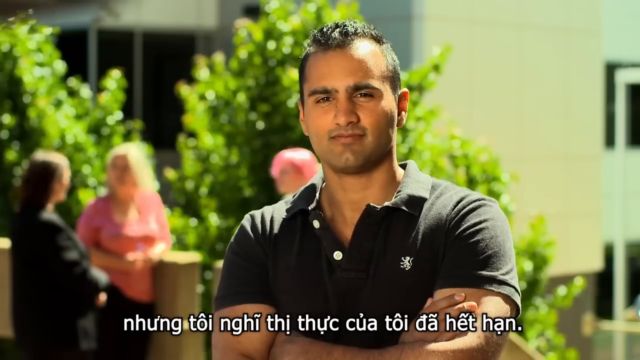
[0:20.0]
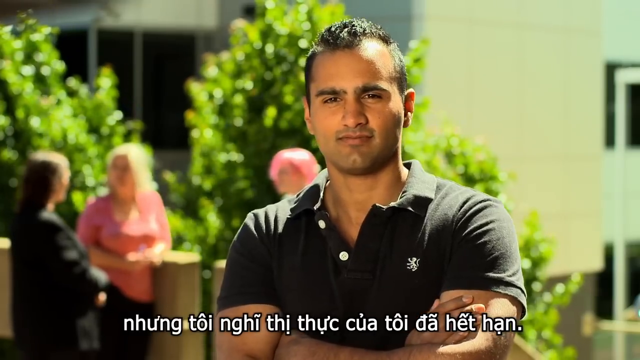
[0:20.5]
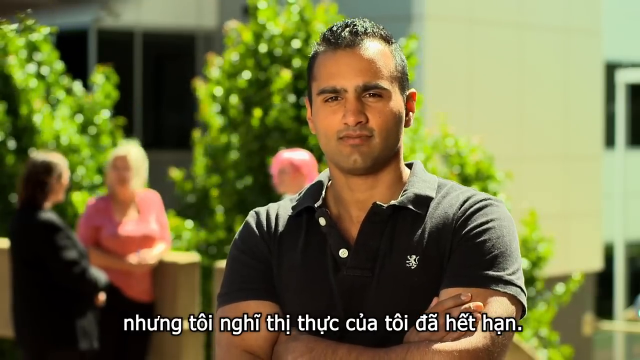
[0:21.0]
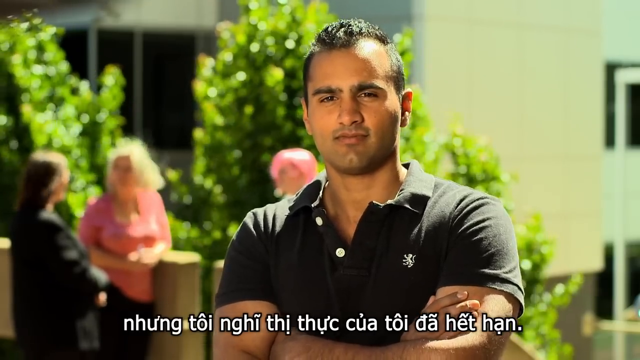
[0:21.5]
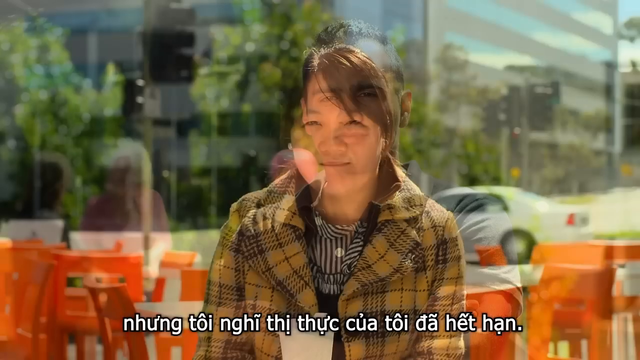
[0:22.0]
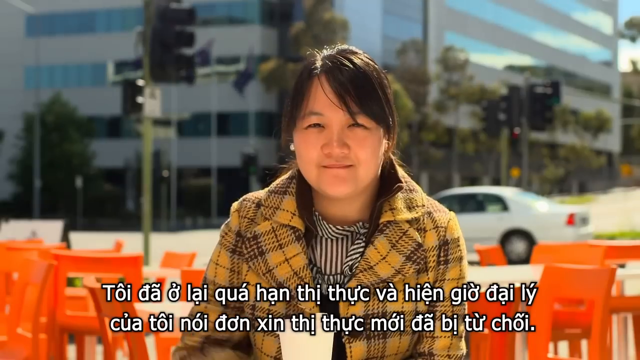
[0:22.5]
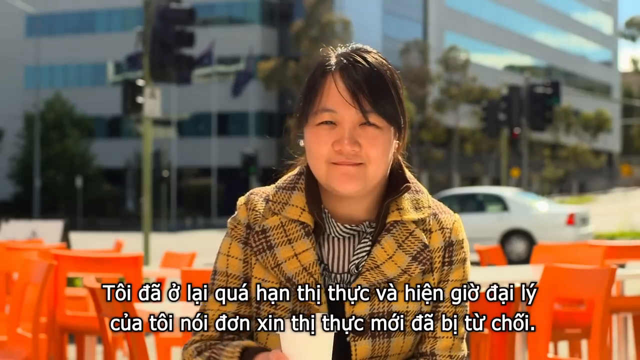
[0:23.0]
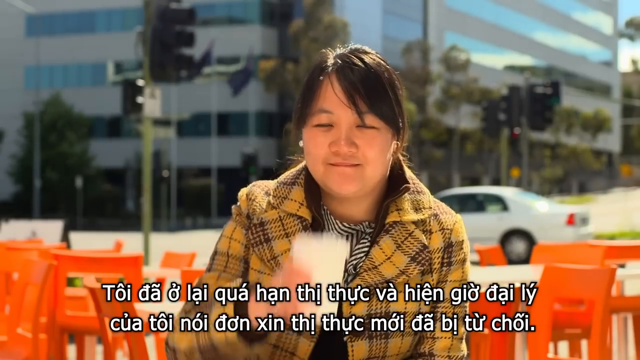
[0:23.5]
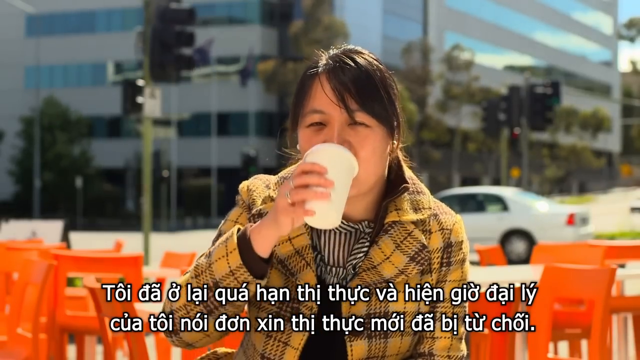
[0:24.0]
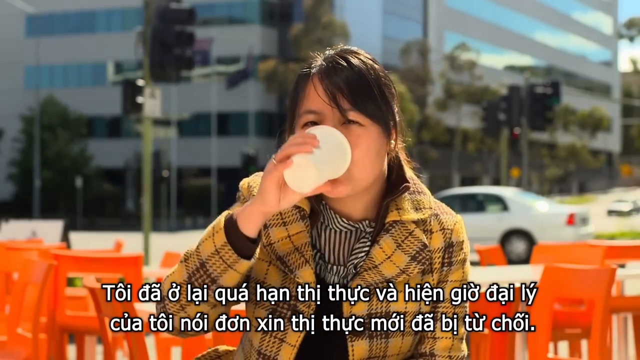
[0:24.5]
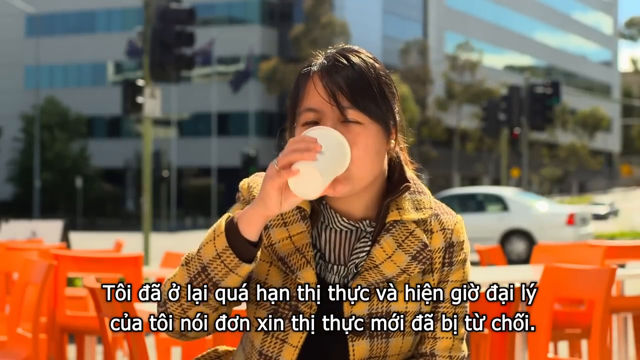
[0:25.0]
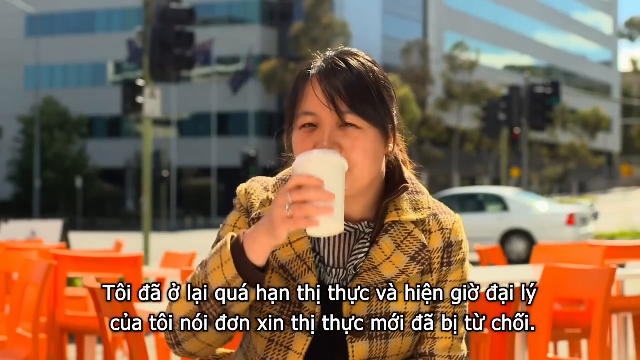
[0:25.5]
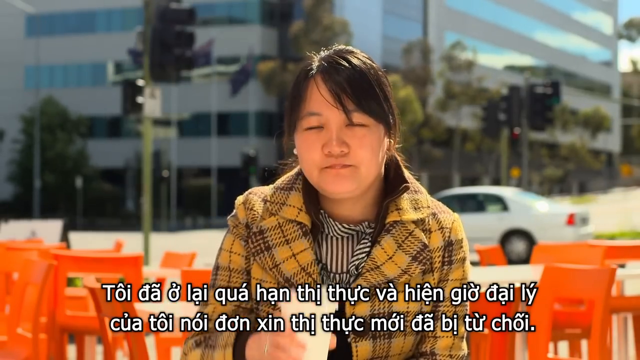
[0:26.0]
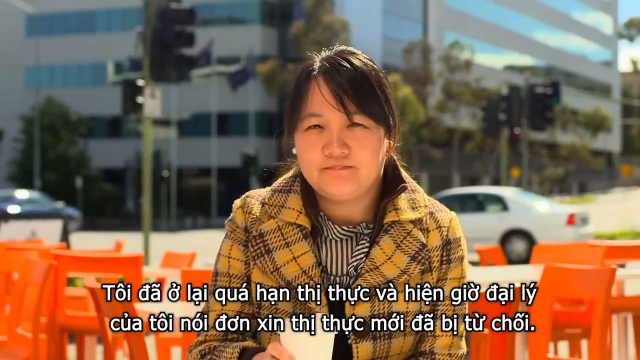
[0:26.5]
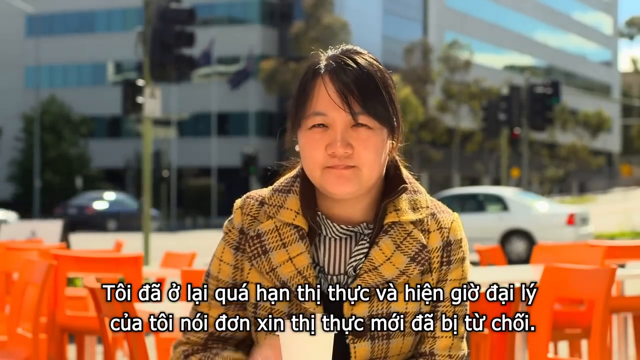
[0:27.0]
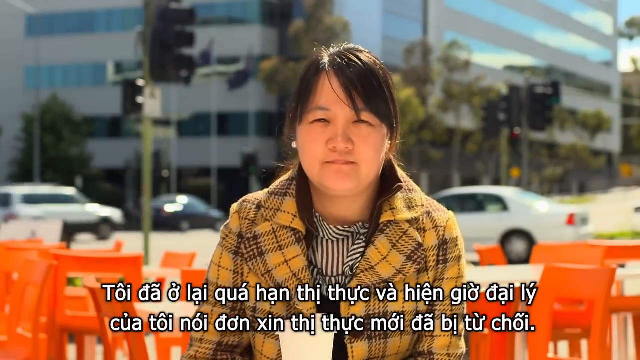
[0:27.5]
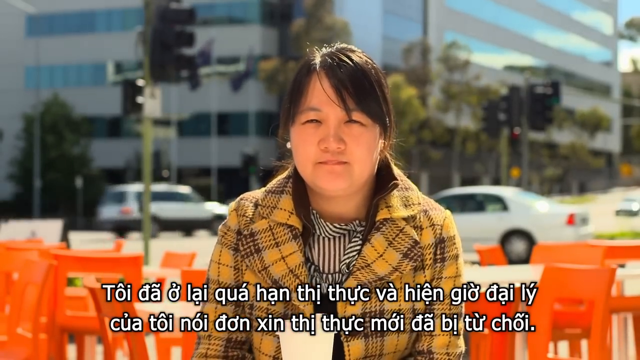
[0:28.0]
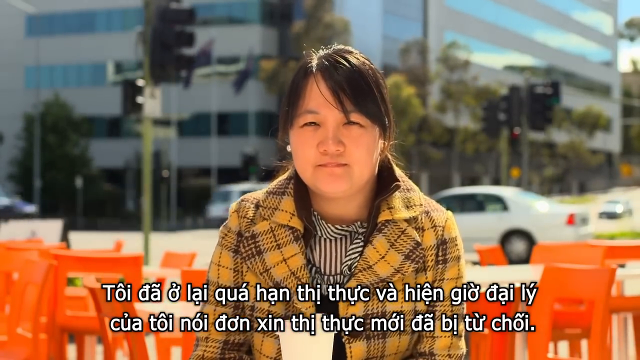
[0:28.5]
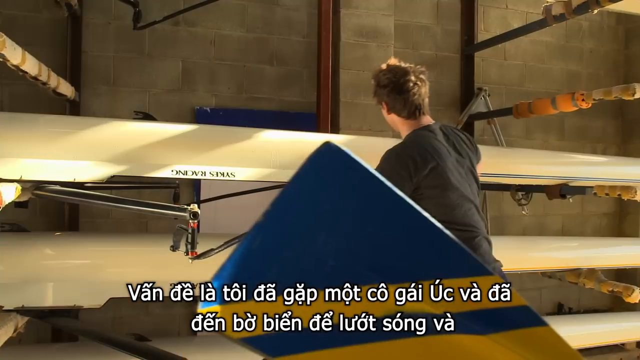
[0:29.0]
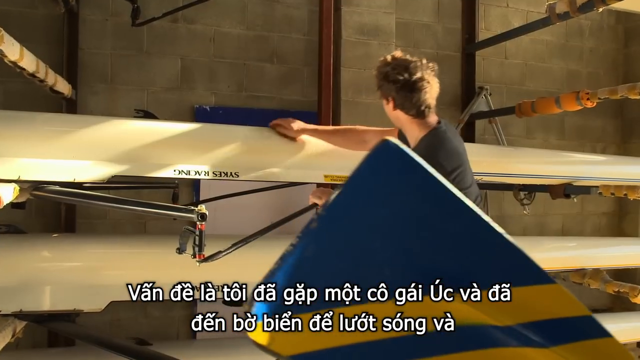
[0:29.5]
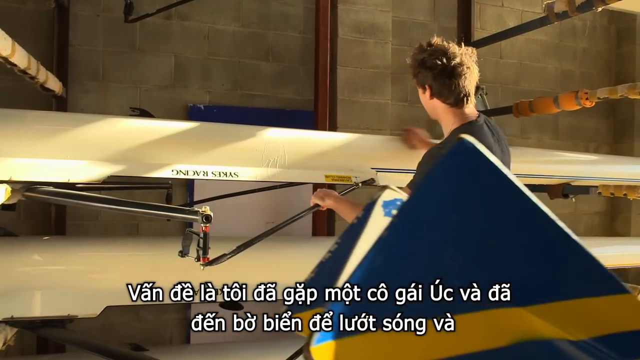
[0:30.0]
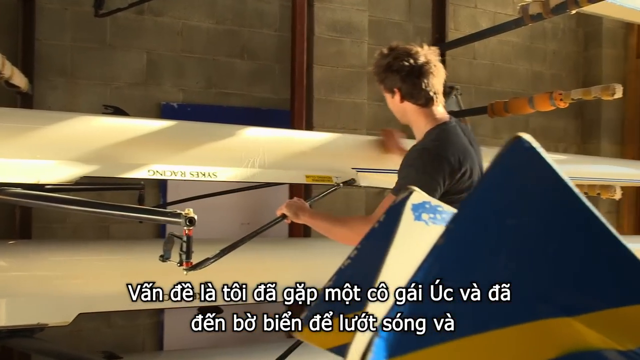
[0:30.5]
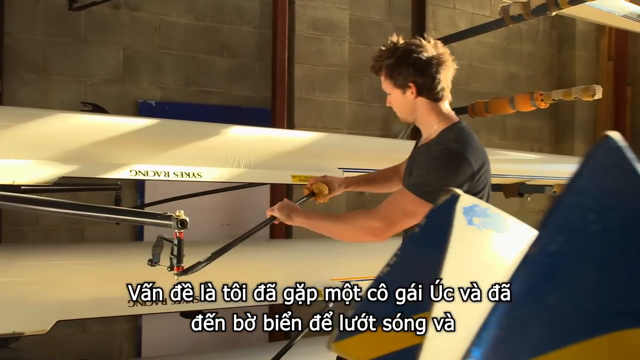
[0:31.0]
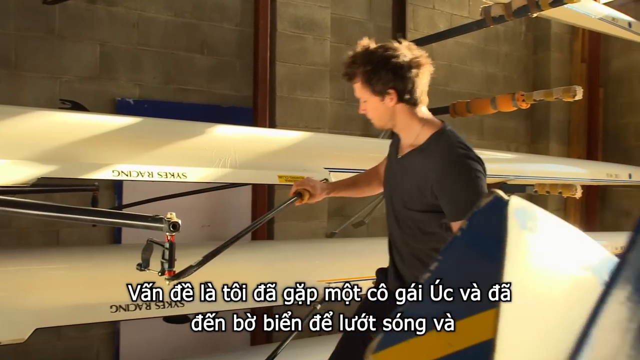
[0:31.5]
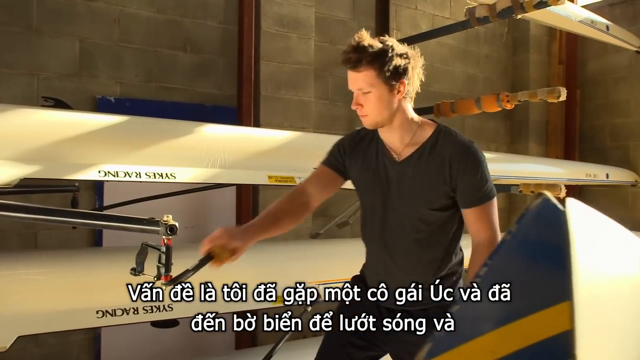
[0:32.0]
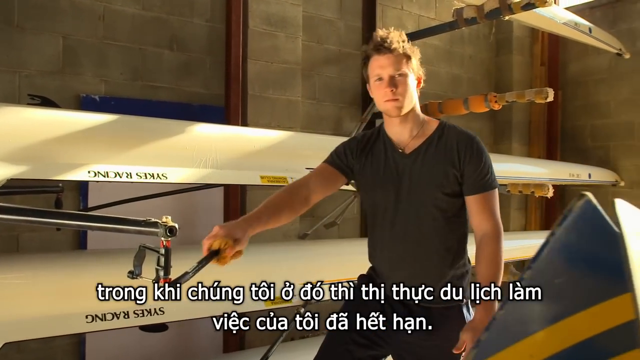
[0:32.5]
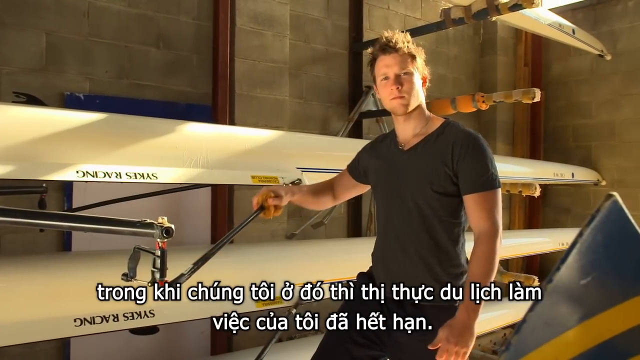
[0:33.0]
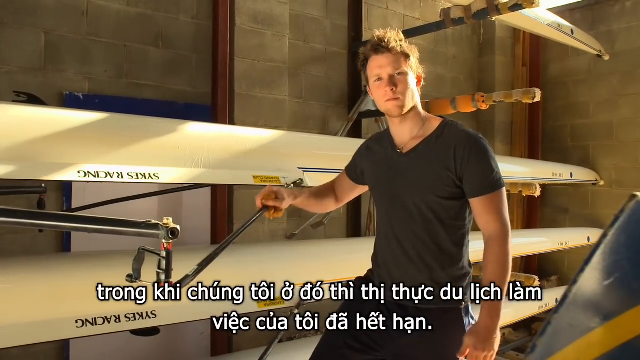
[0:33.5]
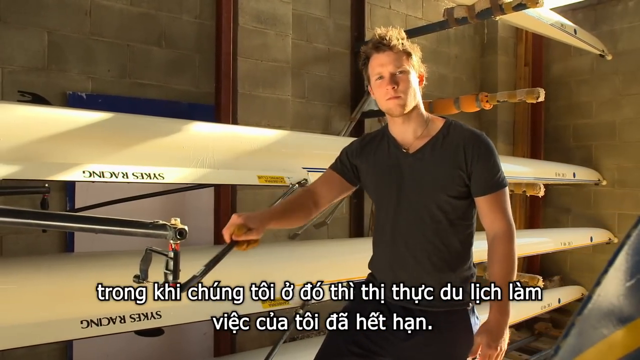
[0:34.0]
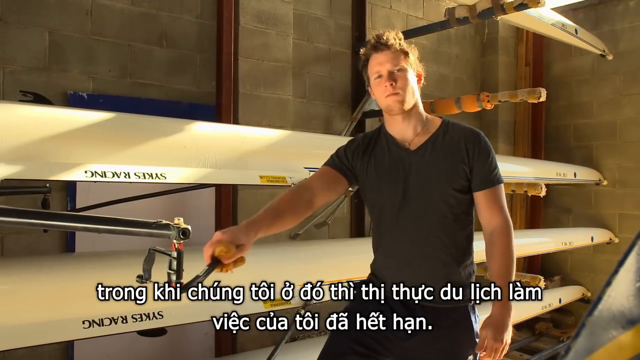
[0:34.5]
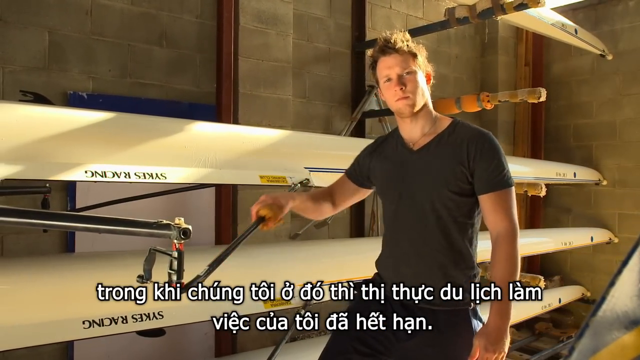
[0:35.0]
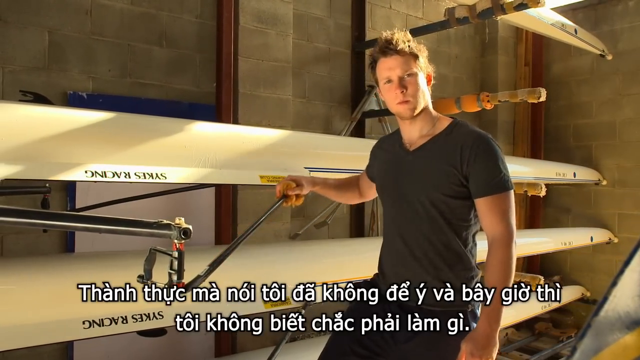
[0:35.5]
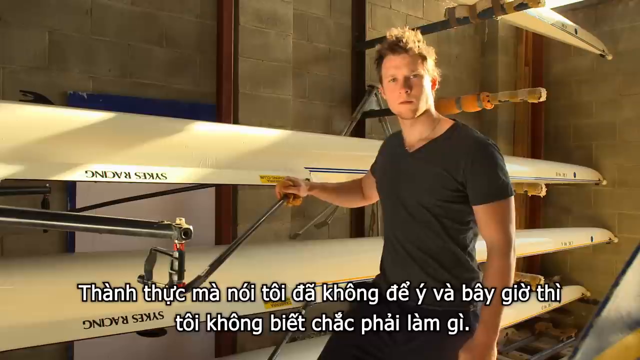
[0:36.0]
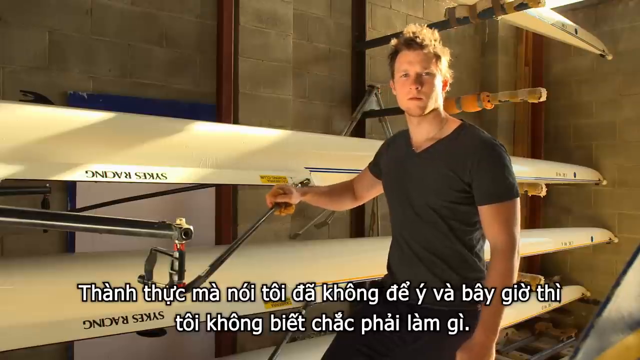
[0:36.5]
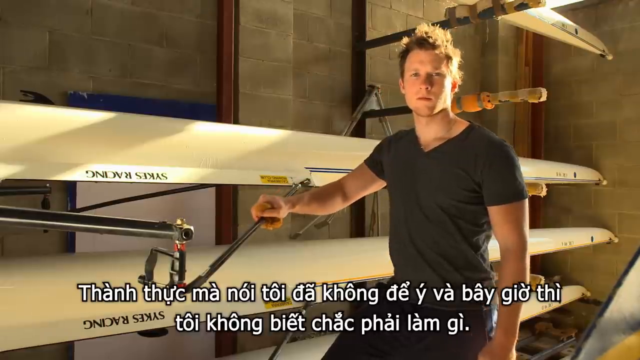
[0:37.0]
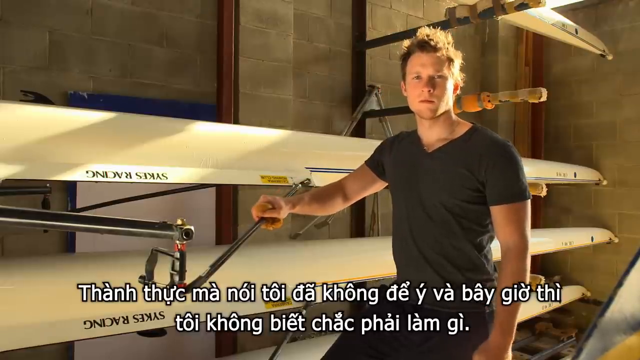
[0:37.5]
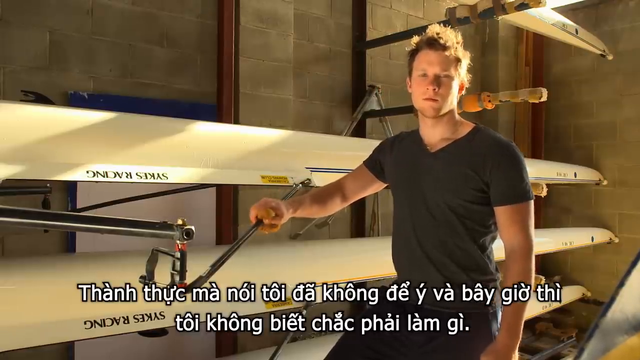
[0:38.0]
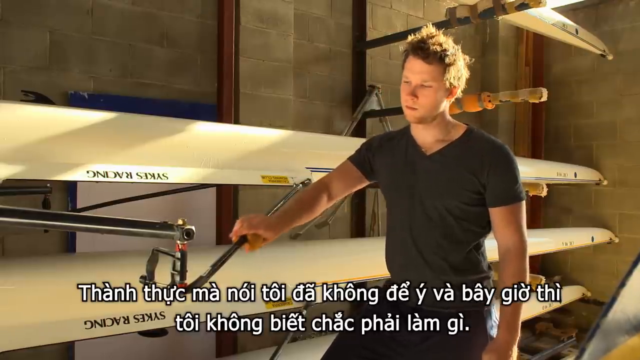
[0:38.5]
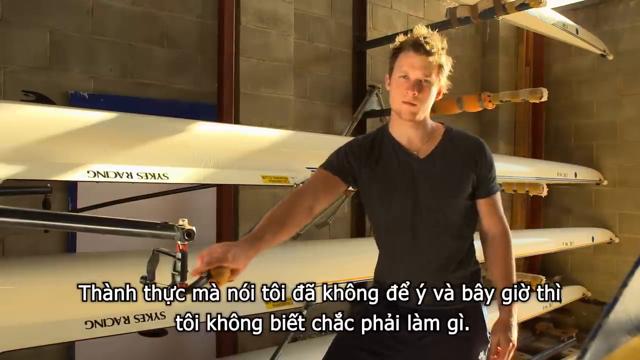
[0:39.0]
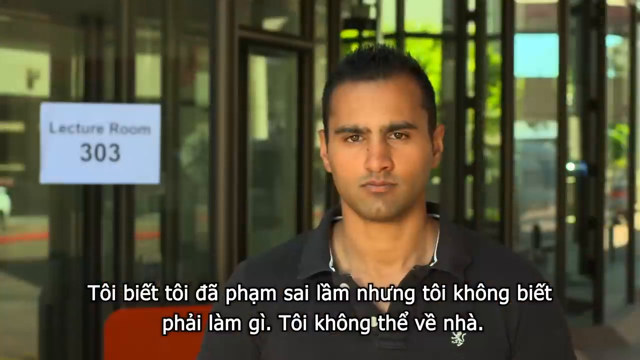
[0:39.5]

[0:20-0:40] Three people stand in the background, and a girl has her left arm resting on some kind of wood wall or ledge to her left. She is turned toward the girl to her right and appears to wear a black long-sleeve shirt, with darker hair. Blonde hair is also visible. The girl further to the right, on the other side of the man's right shoulder, has somewhat pink hair. The wind blows everything around. The video returns to the woman, who appears to be sipping coffee and is not talking yet, seemingly waiting to speak. The coffee is in what looks like a plain white cup, which is set right in front of her. Next, a man stands, apparently with a rag, wiping a canoe, which looks like some kind of water apparatus hanging upside down on a rack. It reads "Sykes racing". He rubs it up and down while staring at the camera. He wears a V-neck collar shirt. His left arm hangs aside, and he turns a little, using the rag to rub different areas of the canoe as well as the black bar on the canoe.